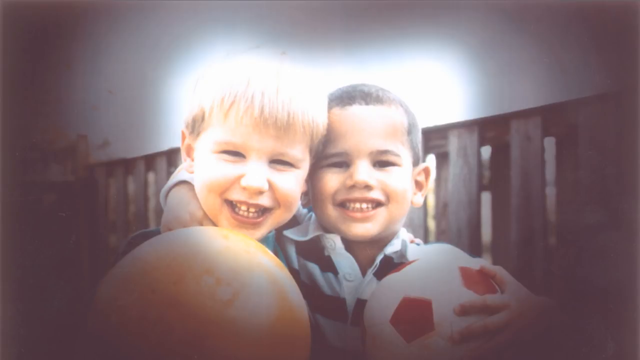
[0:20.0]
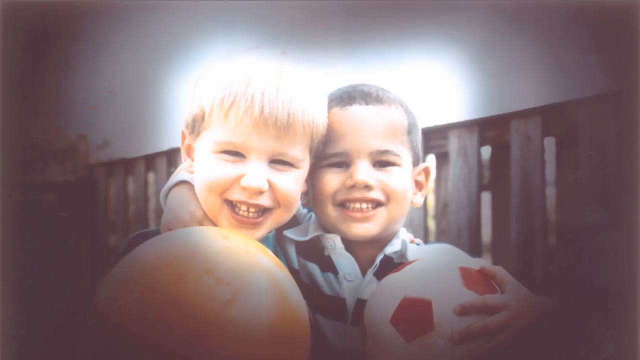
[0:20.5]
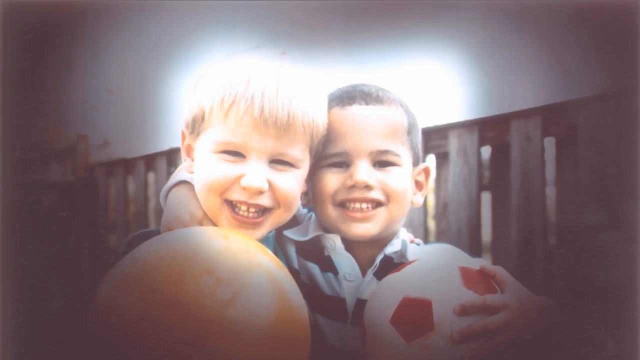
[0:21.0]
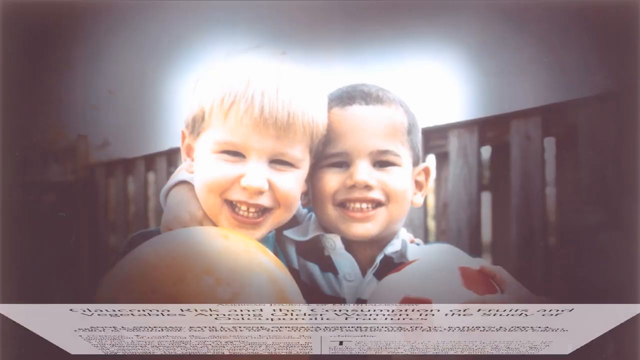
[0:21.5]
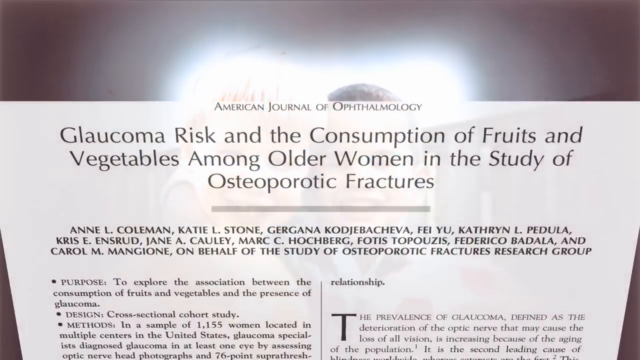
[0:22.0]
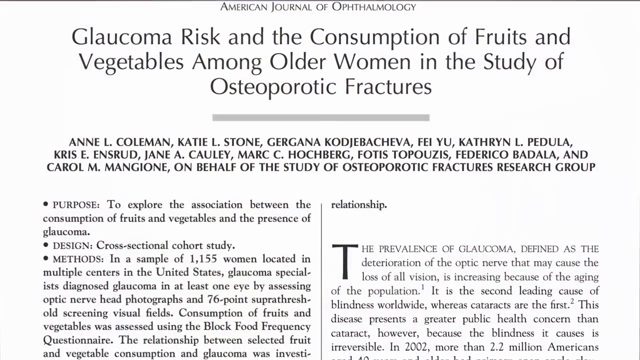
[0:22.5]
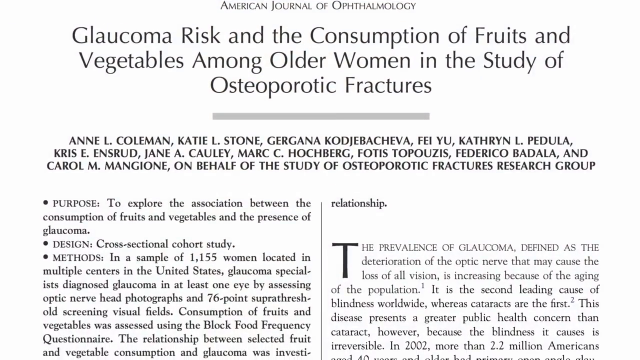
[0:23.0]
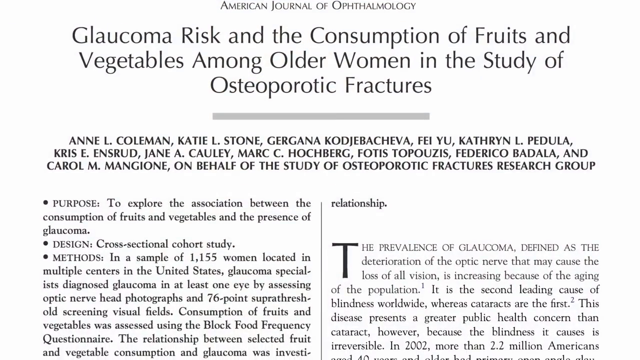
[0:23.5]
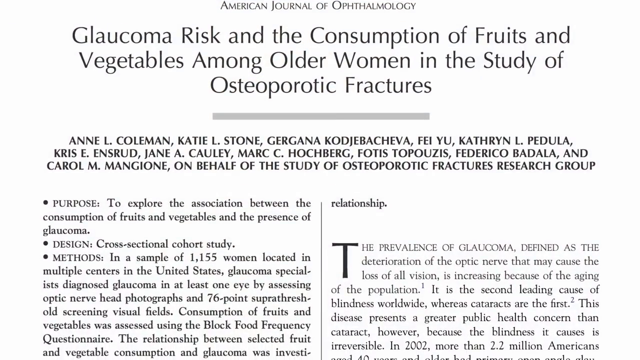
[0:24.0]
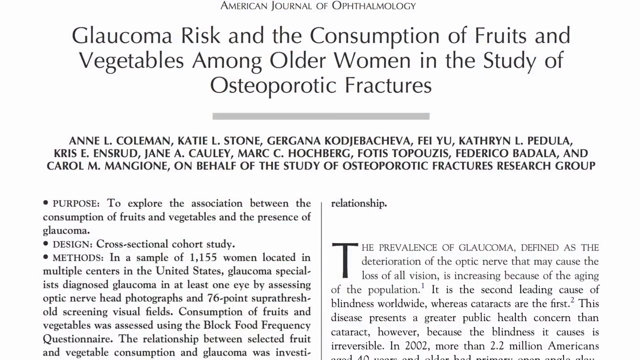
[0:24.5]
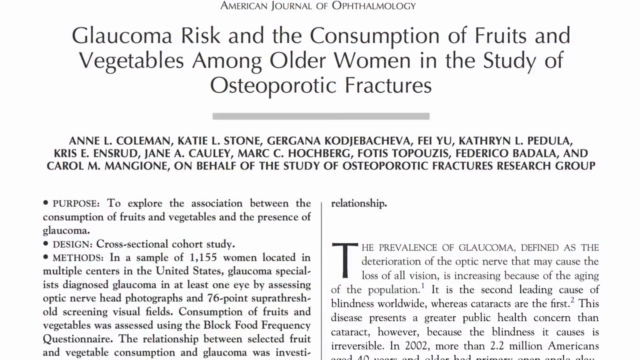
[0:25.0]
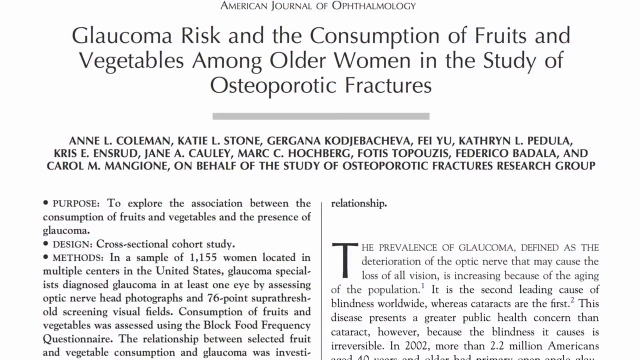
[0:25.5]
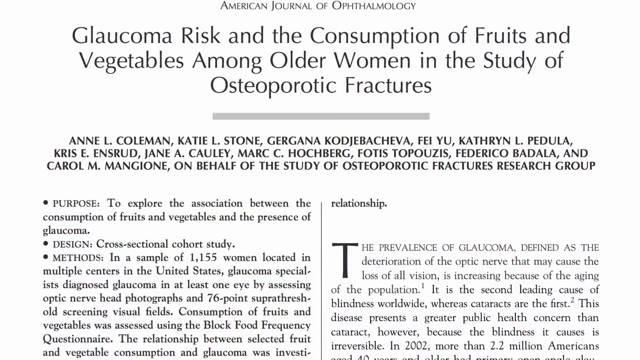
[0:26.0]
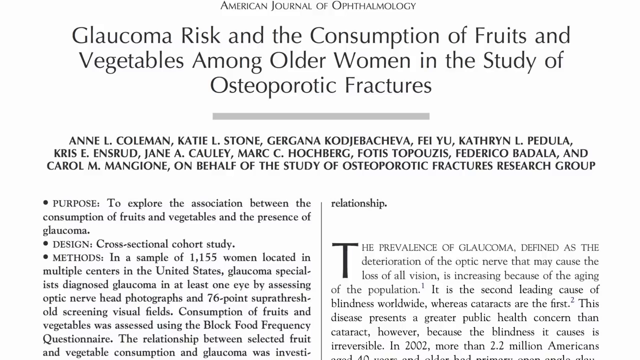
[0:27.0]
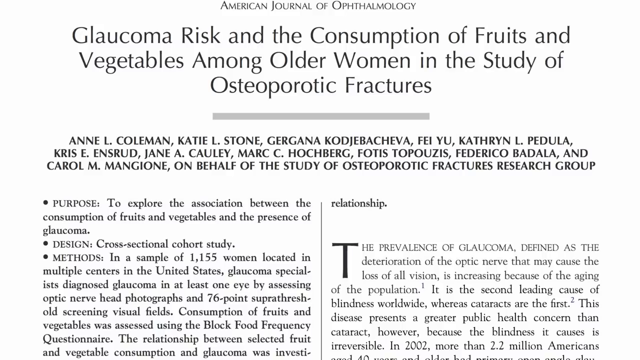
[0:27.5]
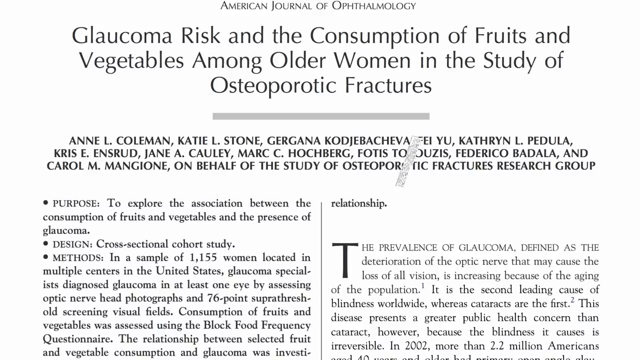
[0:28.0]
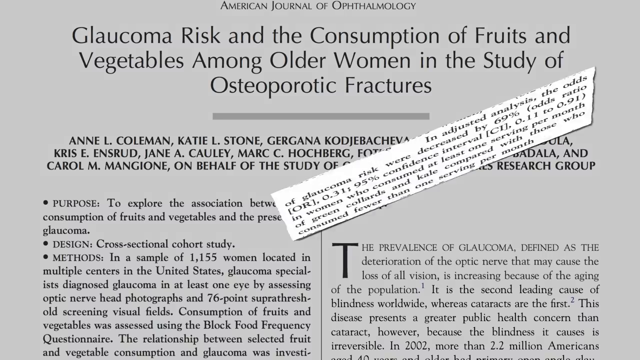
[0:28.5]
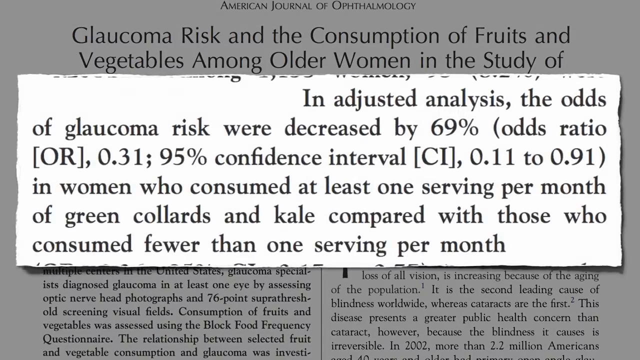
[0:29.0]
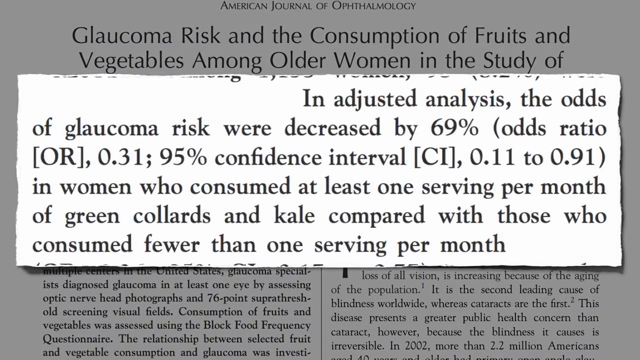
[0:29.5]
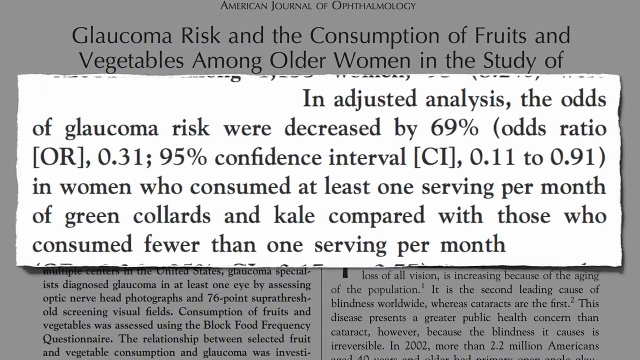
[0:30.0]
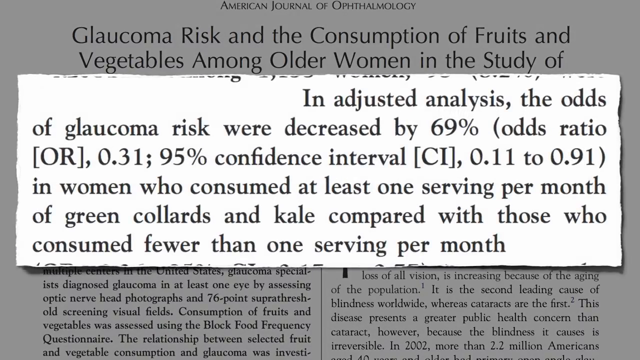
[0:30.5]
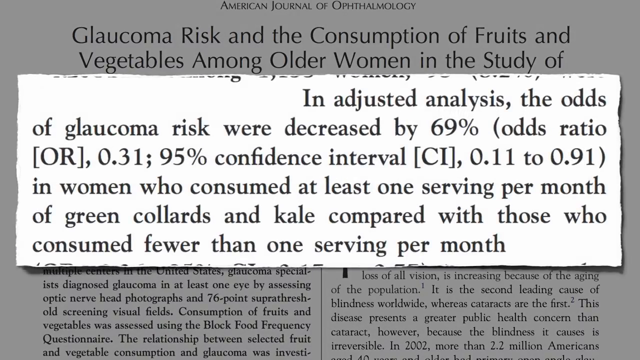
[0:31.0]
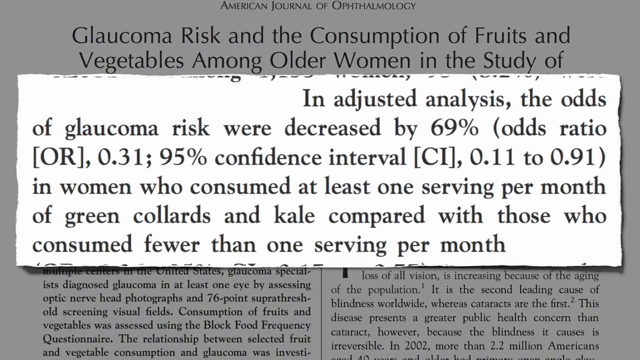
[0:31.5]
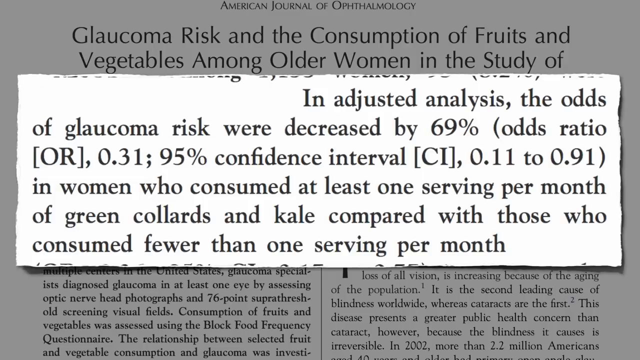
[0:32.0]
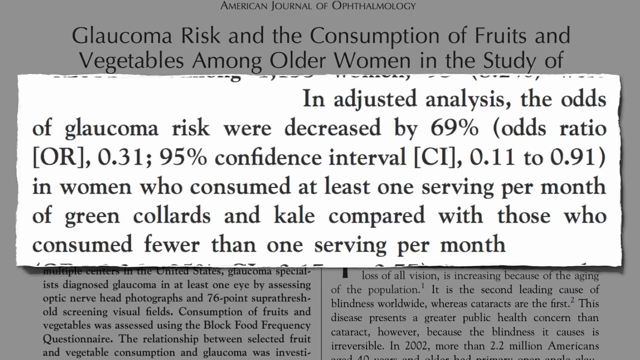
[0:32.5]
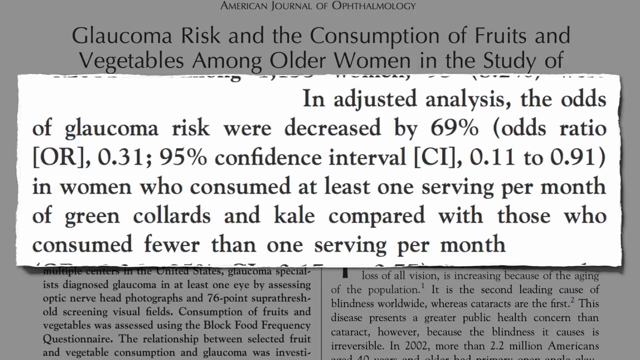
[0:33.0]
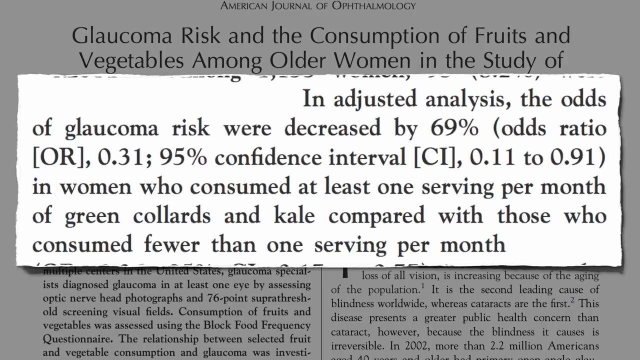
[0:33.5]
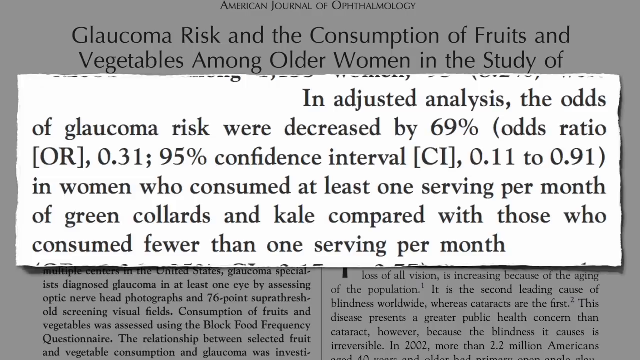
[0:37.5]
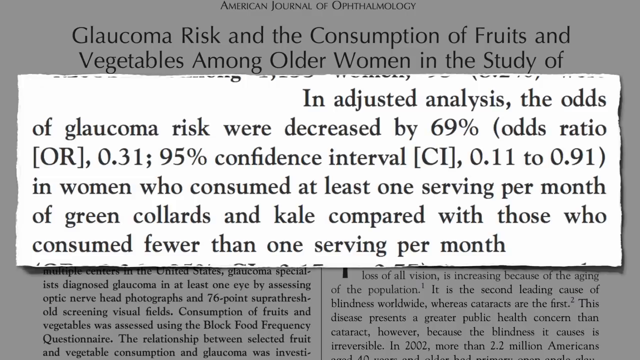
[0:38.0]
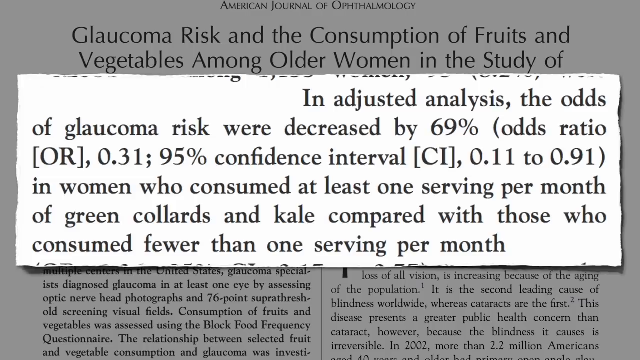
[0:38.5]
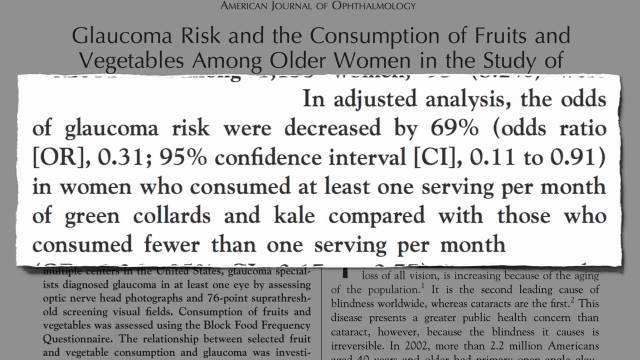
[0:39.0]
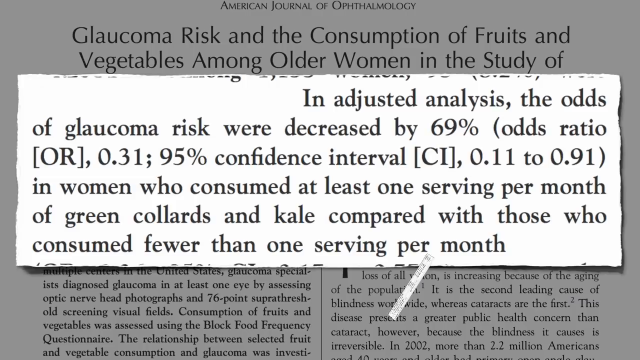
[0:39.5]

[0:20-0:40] An outdoor image shows two young boys, about three years old each, on a sunny day. They are head-to-head and smiling, and the one on the left has his arm around the shoulder of the one on the right. Both hold bouncing toy balls, and they appear to be standing on a wooden deck. Around the image and in the background there is shading, and in the middle, around their heads, is light in the shape of a heart. The video transitions to an article that appears to be in a book, possibly a magazine. It is from the American Journal of Ophthalmology, titled "Glaucoma Risk and the Consumption of Fruits and Vegetables Among Older Women in the Study of Osteoporotic Fractures." The article lists several names of a group of researchers, followed by bullet points and then typical article text. After a transition, a small cut-out blurb from an article appears in the middle of the screen.